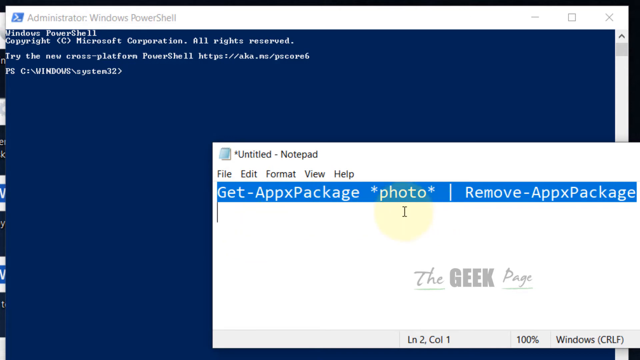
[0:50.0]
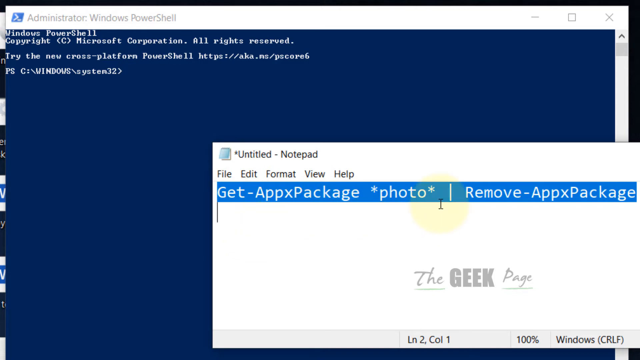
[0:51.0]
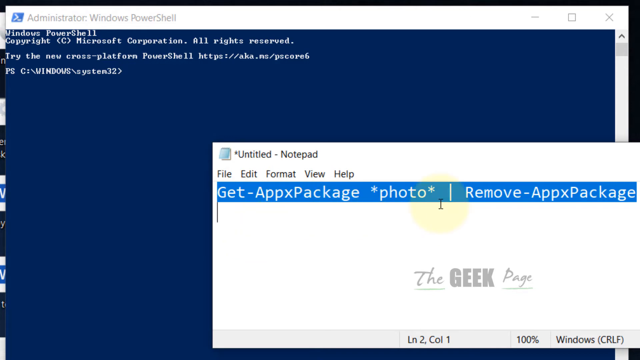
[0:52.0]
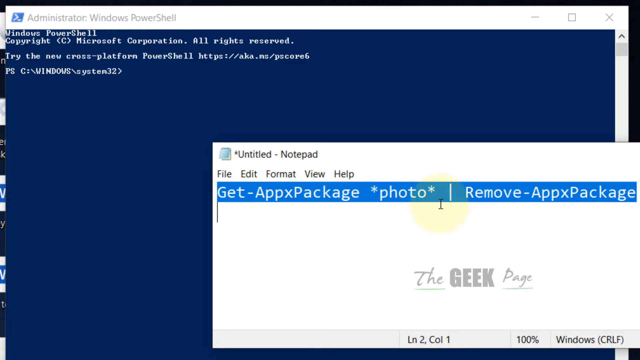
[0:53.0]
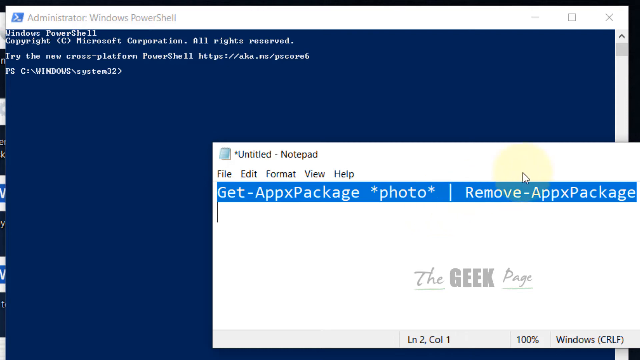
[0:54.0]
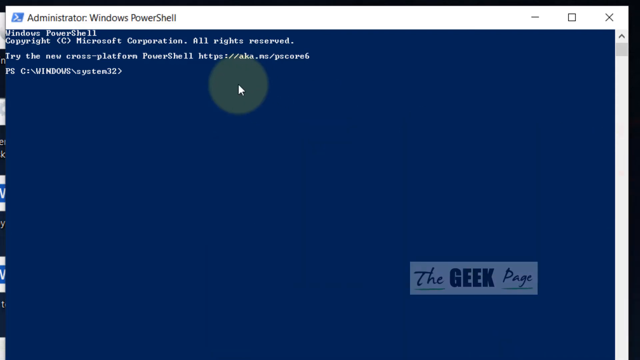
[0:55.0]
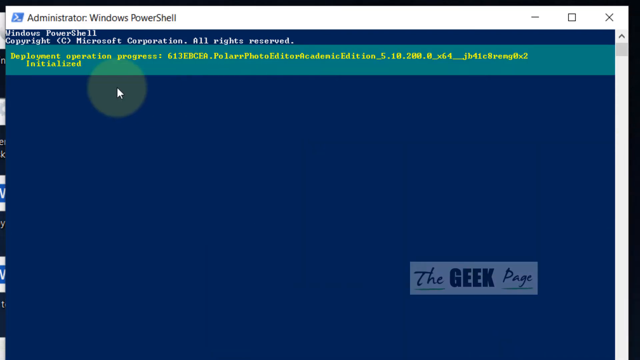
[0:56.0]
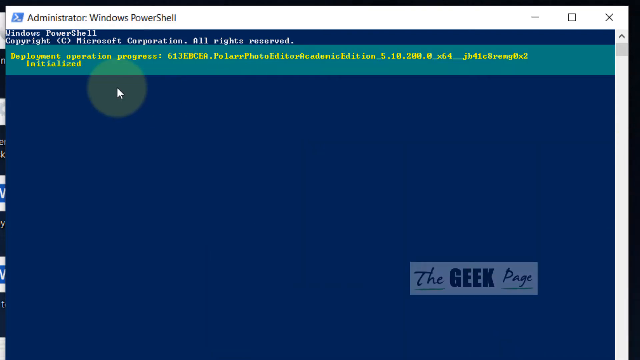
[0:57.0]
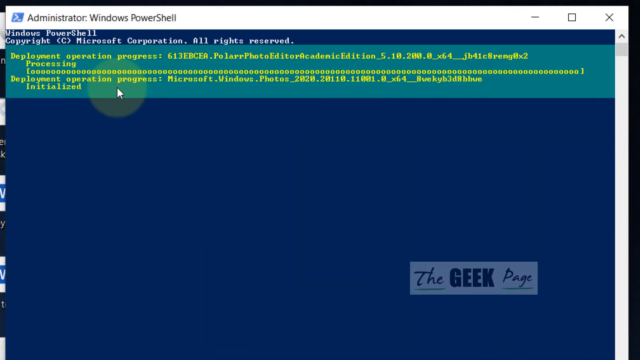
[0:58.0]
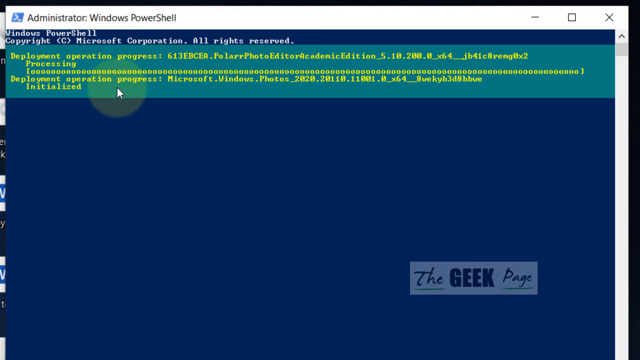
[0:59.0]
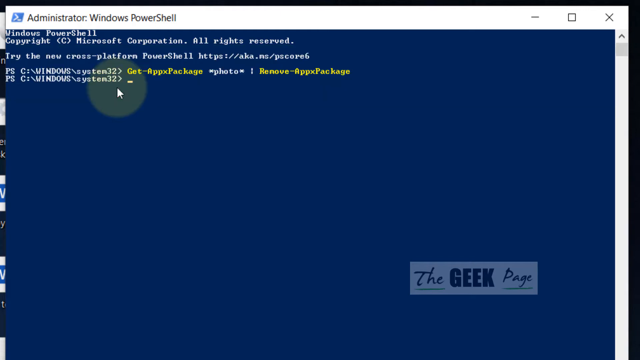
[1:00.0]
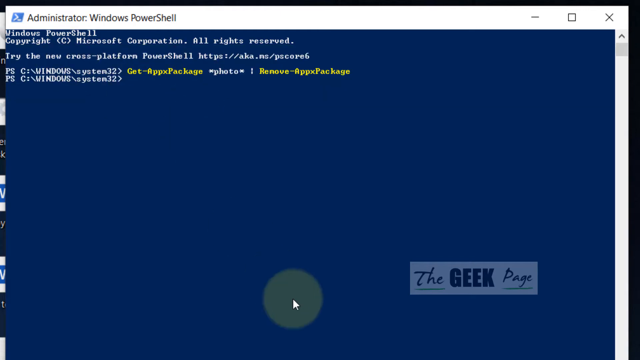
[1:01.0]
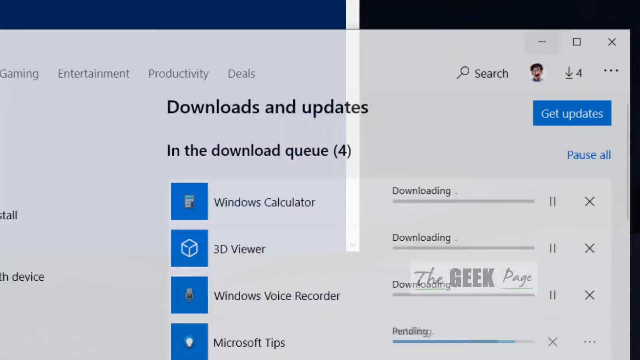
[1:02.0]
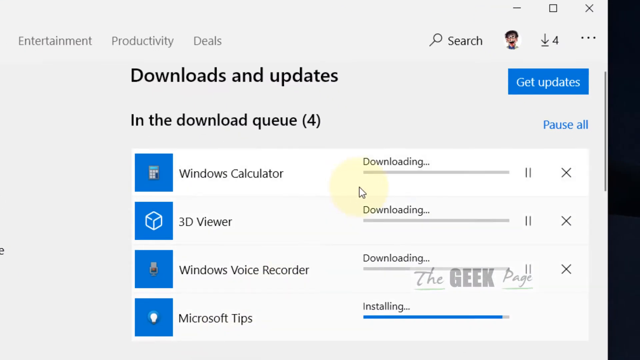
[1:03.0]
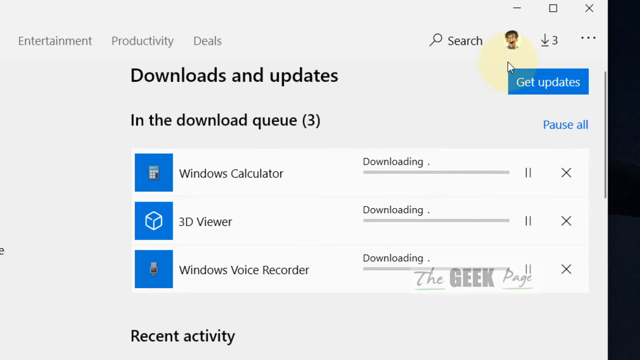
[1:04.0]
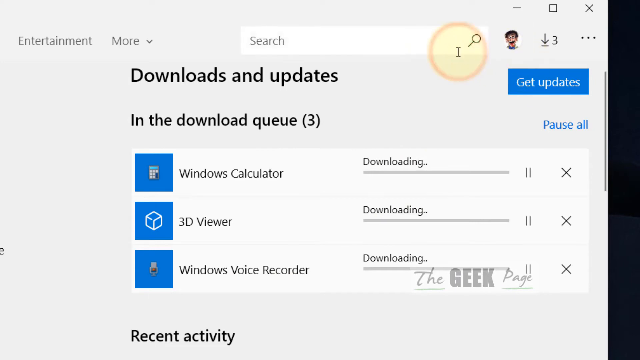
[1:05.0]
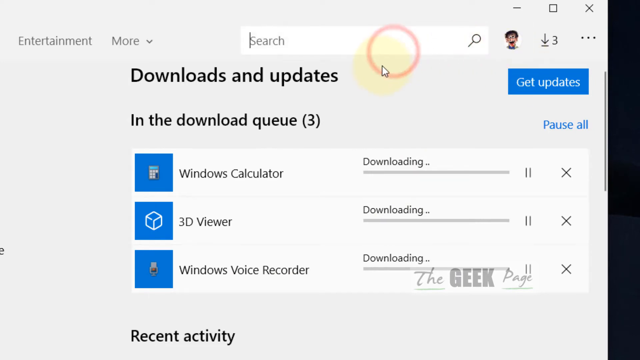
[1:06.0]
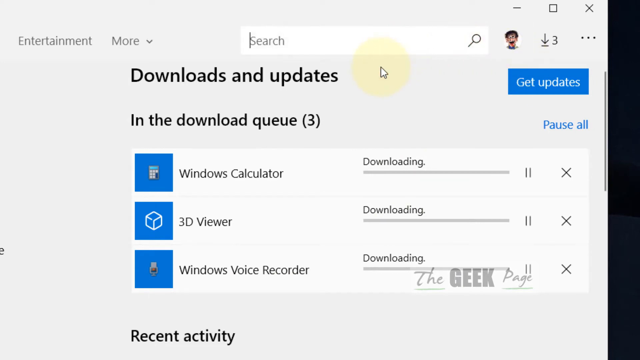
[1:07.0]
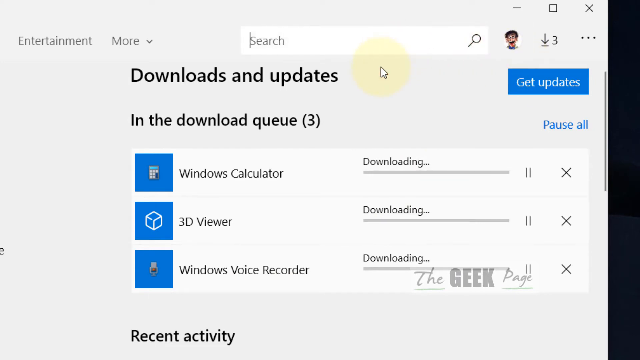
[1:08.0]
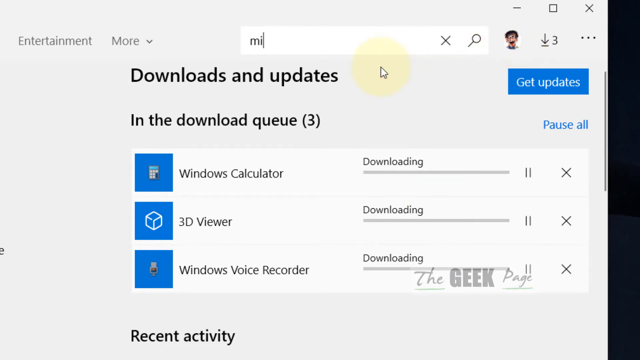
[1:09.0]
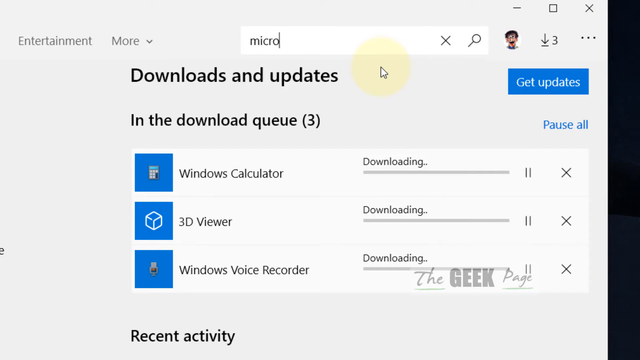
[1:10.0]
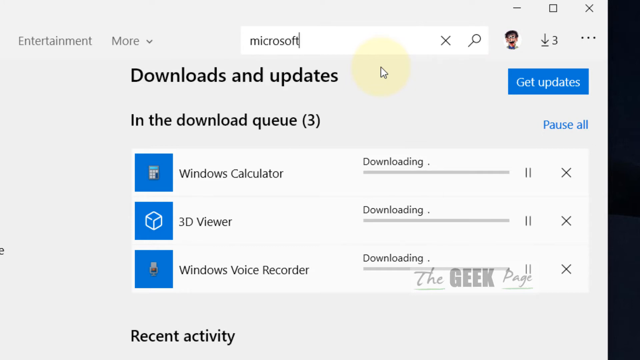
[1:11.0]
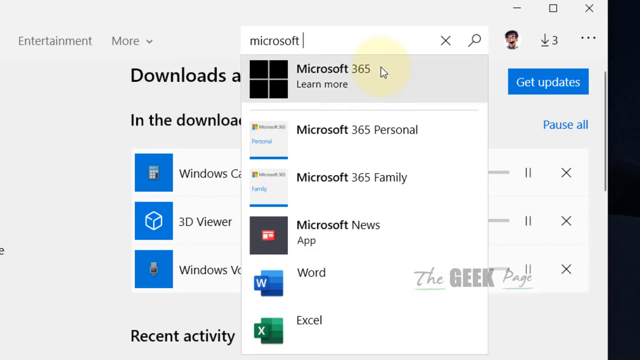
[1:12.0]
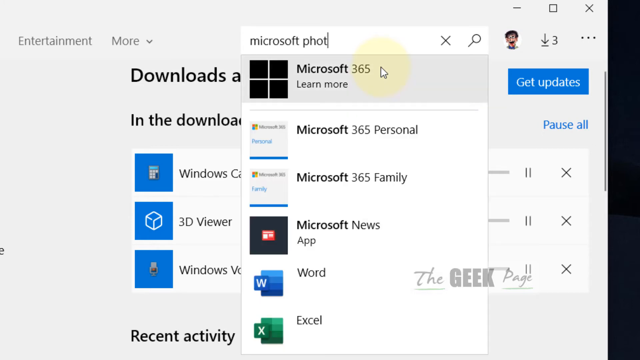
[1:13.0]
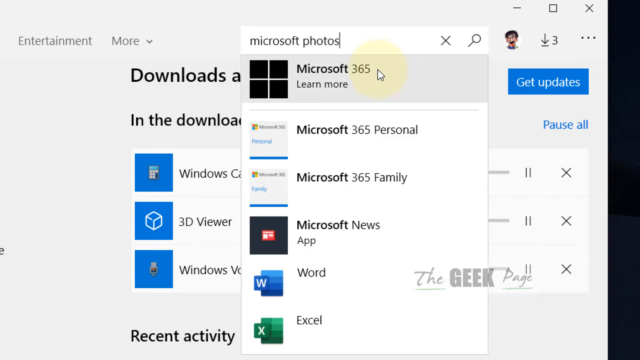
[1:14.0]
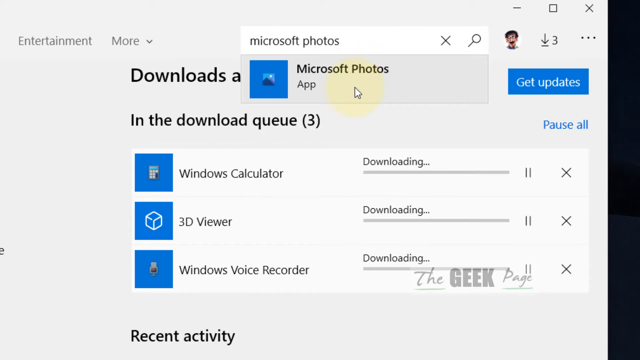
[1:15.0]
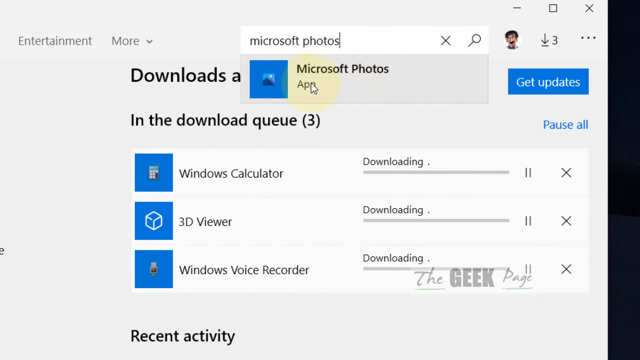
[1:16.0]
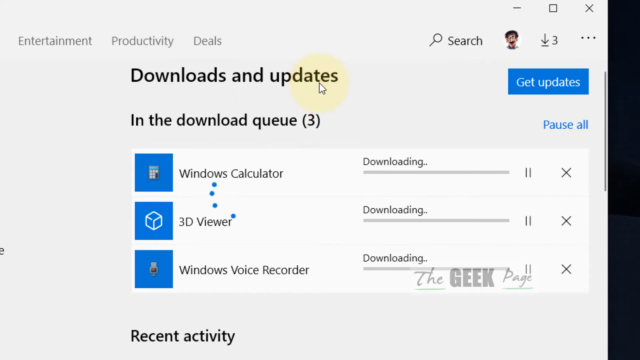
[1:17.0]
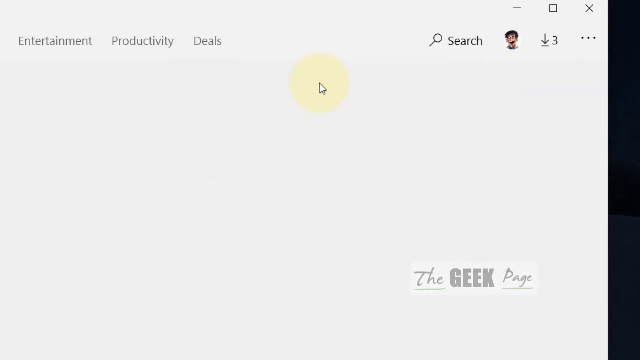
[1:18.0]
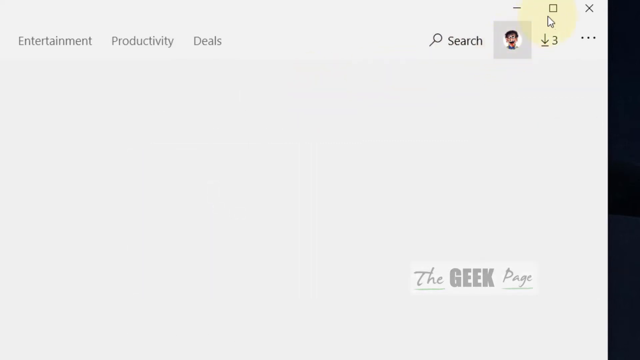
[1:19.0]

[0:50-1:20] A window on a computer screen reads "Administrator Windows PowerShell" at the top, with the minimize, maximize and X close buttons. Beneath it, on a dark bluish-black screen, white text reads "Windows PowerShell Copyright Microsoft Corporation All Rights Reserved. Try the new cross-platform PowerShell" followed by an address, with another line of text beneath that. In the lower right corner is a white pop-up reading "Untitled Notepad" in black text, with four or five buttons below it from left to right: File, Edit, Format, View and Help. The mouse moves around, and suddenly the blue homepage is visible again. In lime green writing at the top it says "deployment operation progress", followed by "613EBCEA.PolarRPhotoEditorAcademicEdition510200". In the lower right corner, "the geek page" is written with the word "geek" bolded, in black against a small white rectangle. The screen then comes to a downloading page where active downloading is occurring, and the mouse types the words "Microsoft photos" in the search bar at the top right.